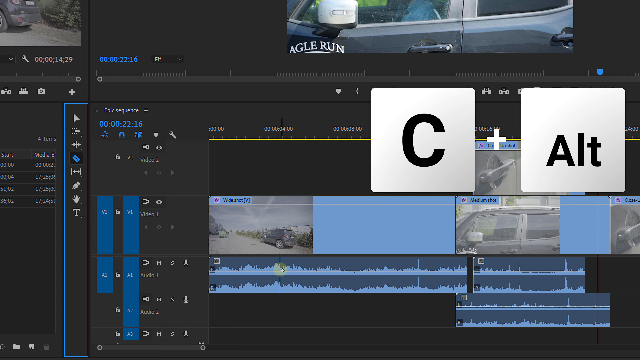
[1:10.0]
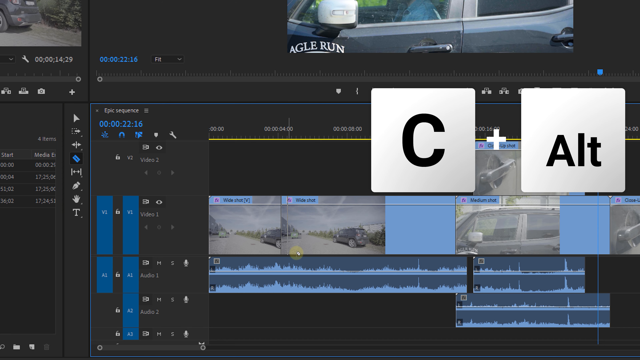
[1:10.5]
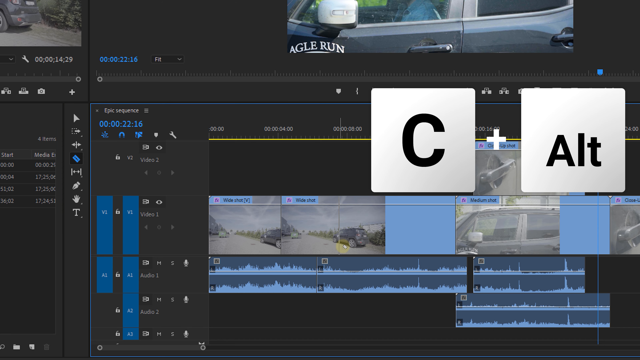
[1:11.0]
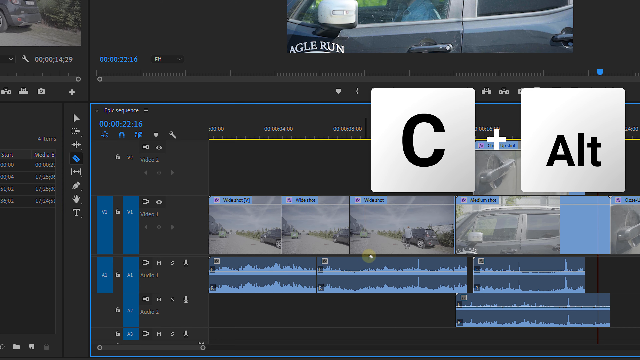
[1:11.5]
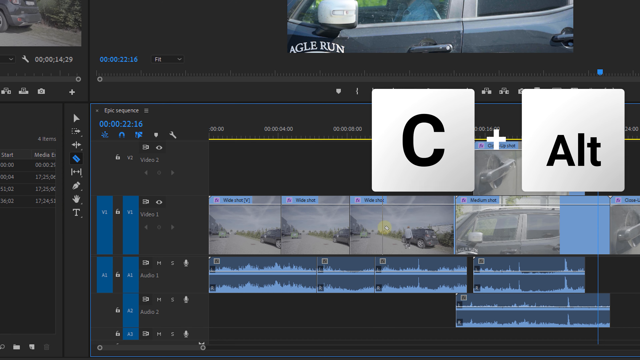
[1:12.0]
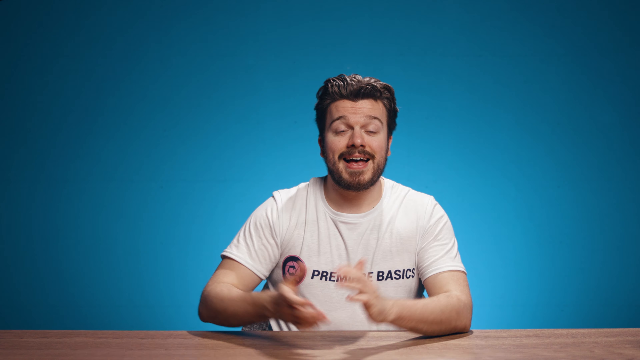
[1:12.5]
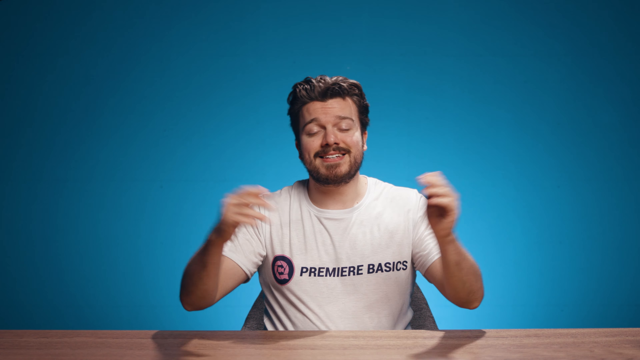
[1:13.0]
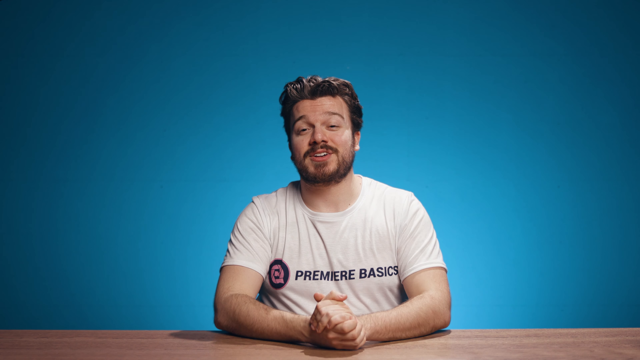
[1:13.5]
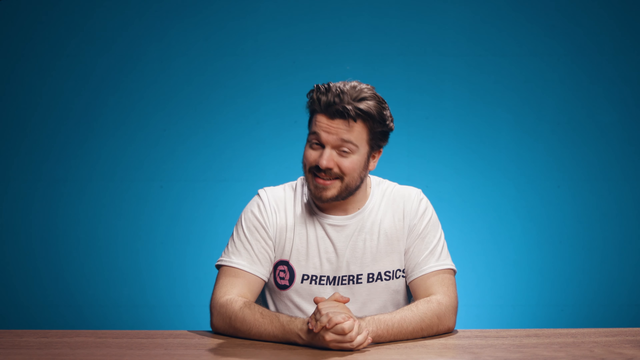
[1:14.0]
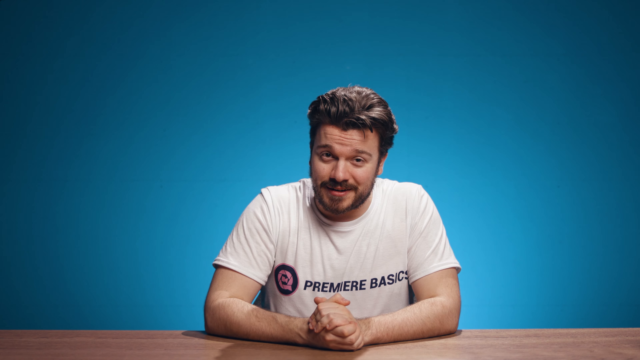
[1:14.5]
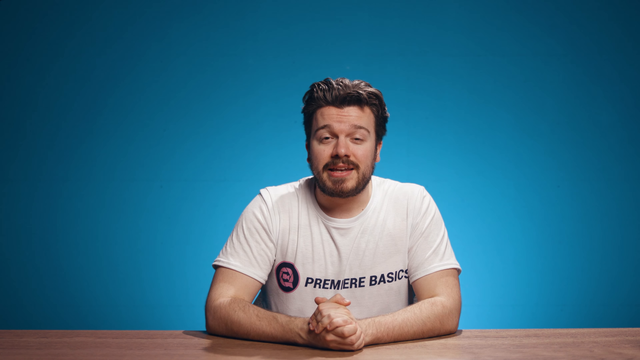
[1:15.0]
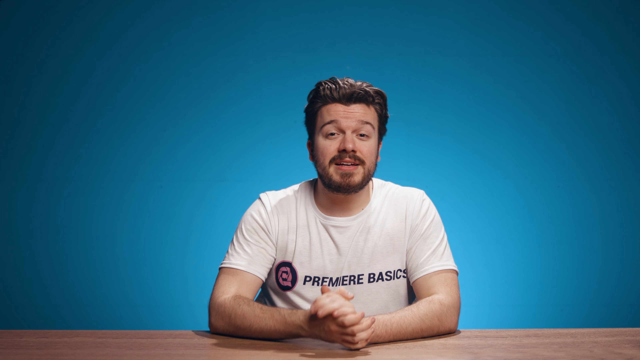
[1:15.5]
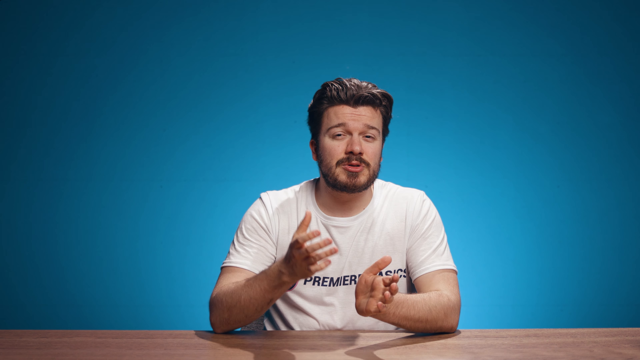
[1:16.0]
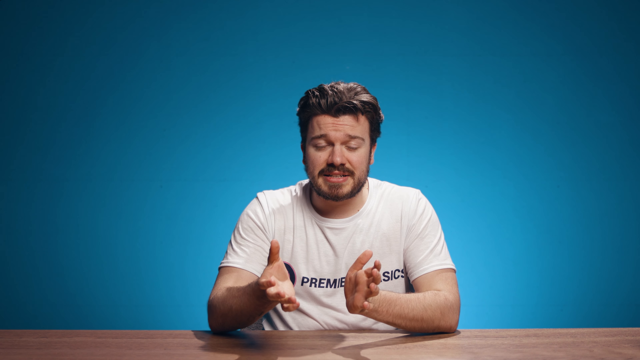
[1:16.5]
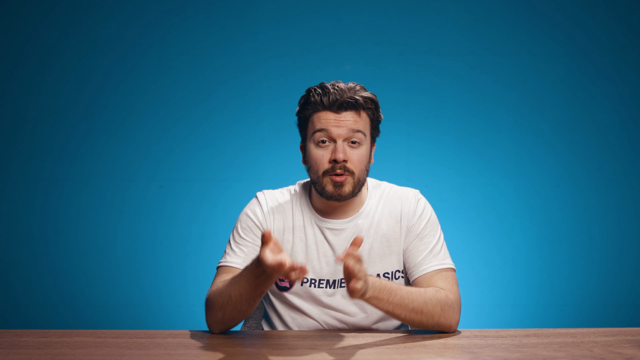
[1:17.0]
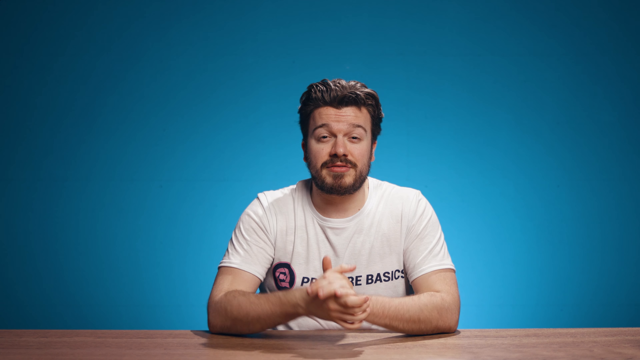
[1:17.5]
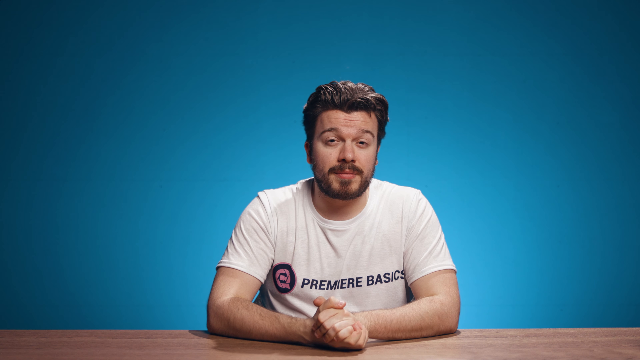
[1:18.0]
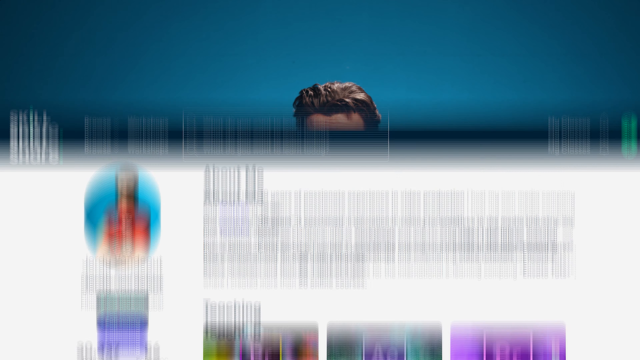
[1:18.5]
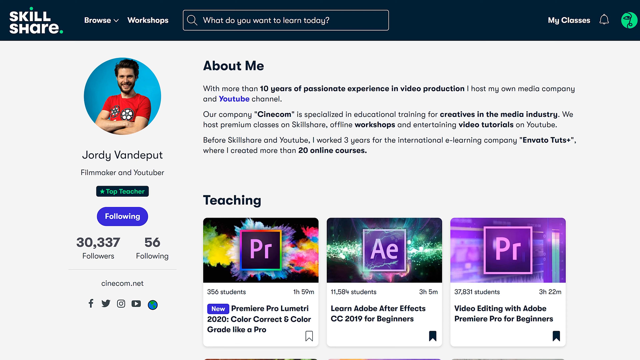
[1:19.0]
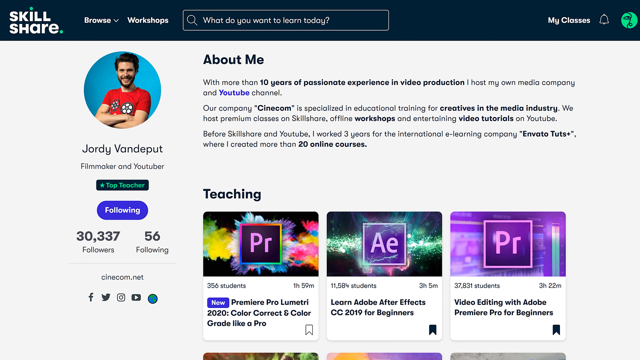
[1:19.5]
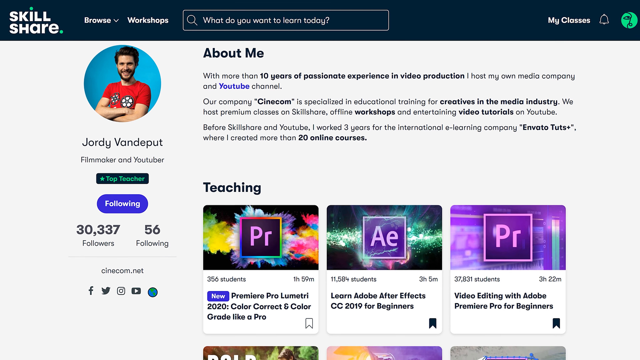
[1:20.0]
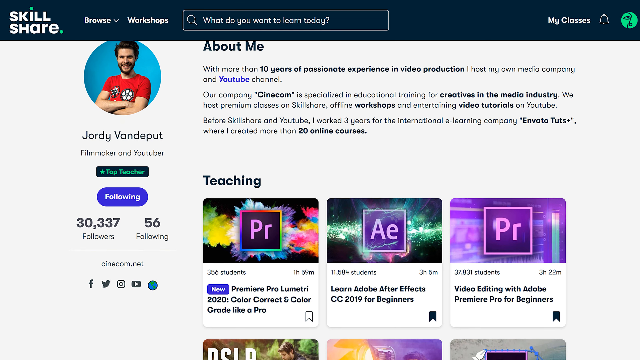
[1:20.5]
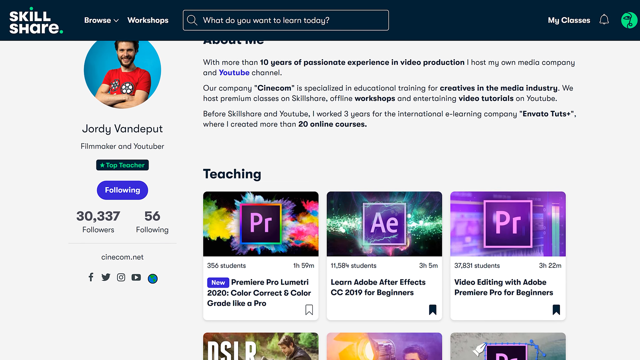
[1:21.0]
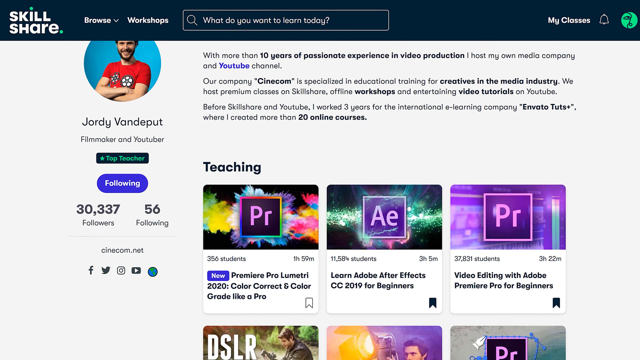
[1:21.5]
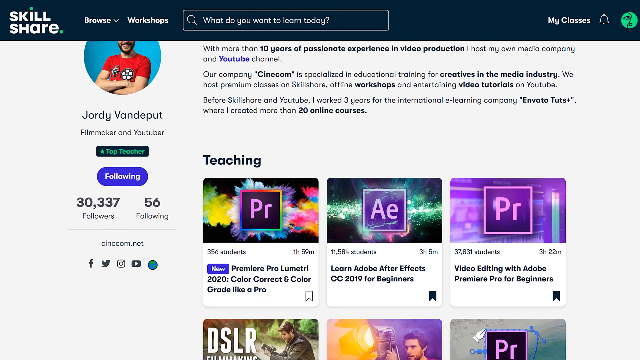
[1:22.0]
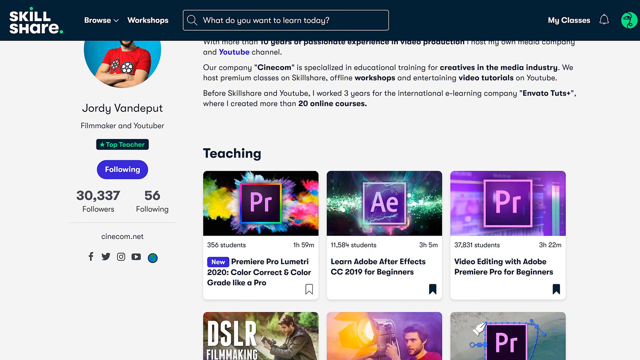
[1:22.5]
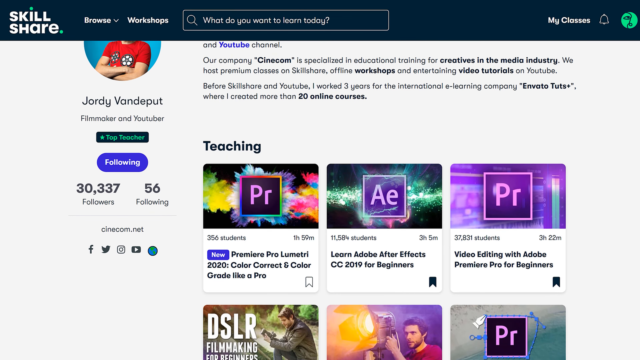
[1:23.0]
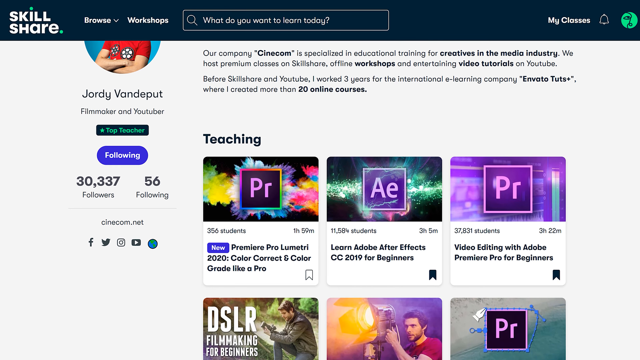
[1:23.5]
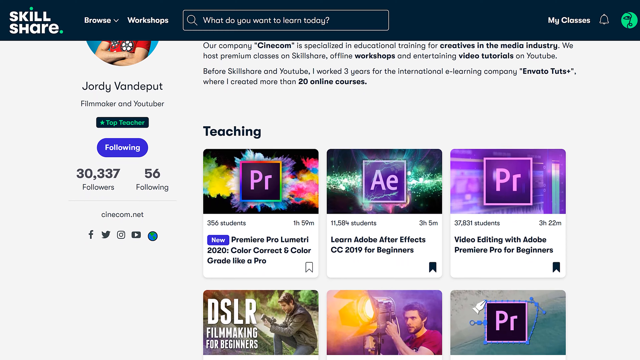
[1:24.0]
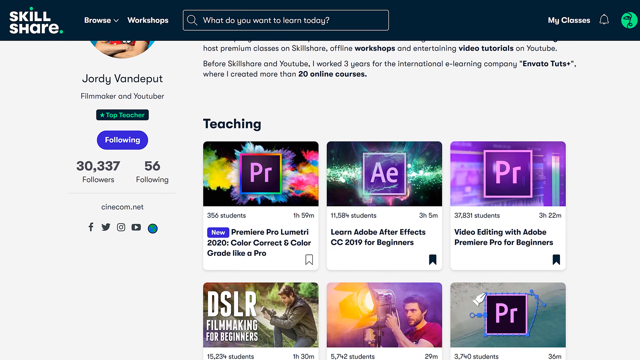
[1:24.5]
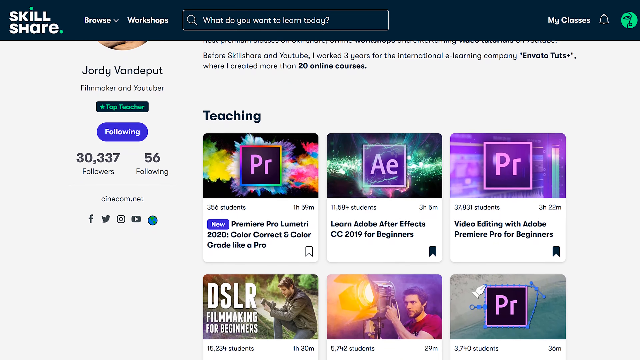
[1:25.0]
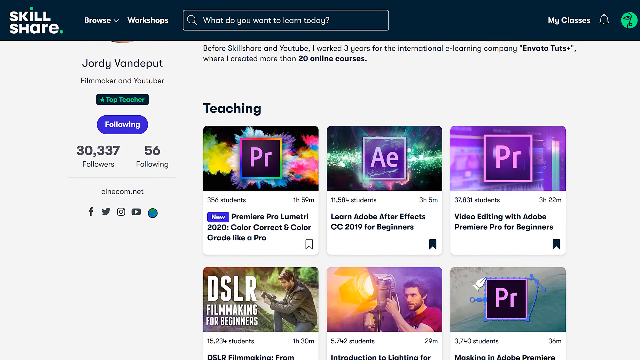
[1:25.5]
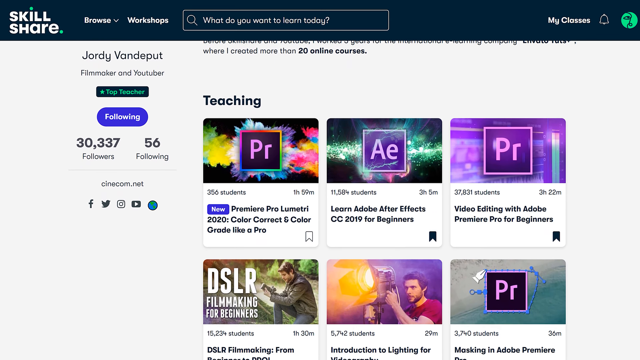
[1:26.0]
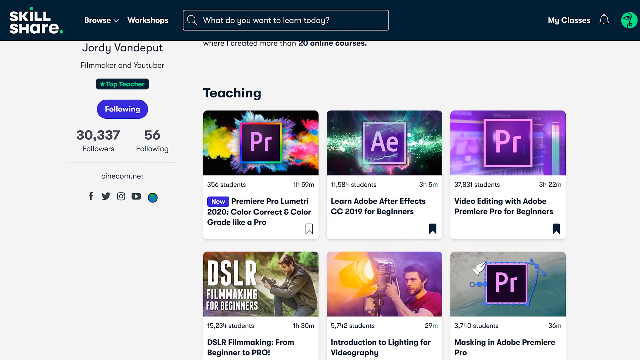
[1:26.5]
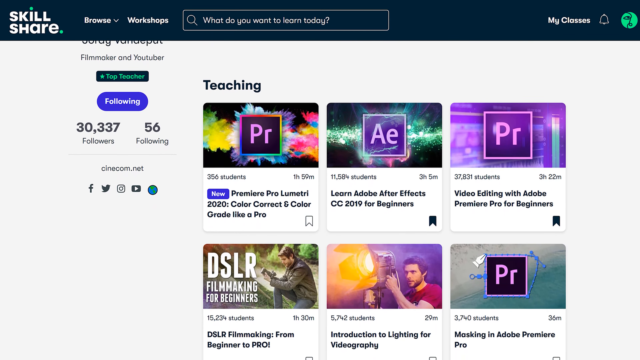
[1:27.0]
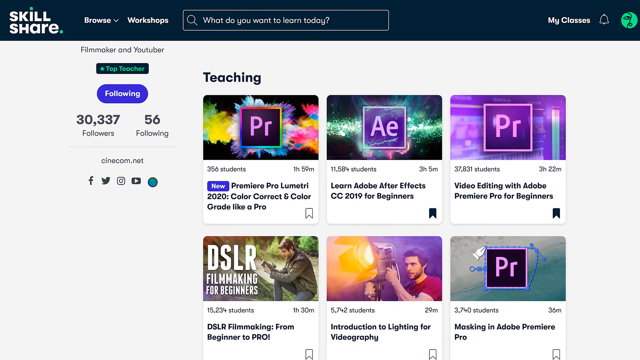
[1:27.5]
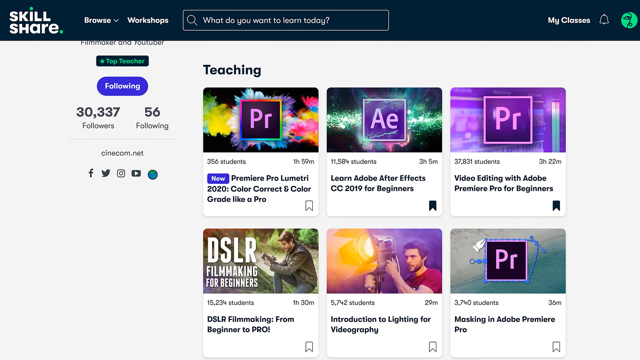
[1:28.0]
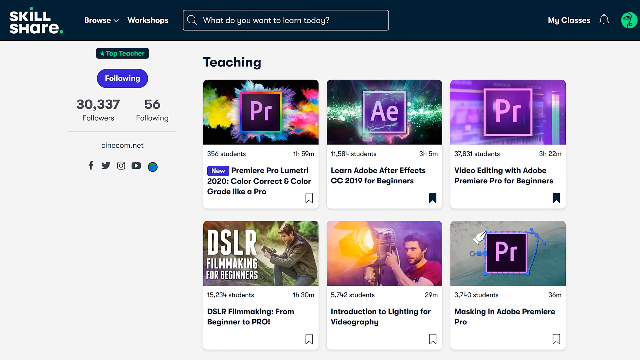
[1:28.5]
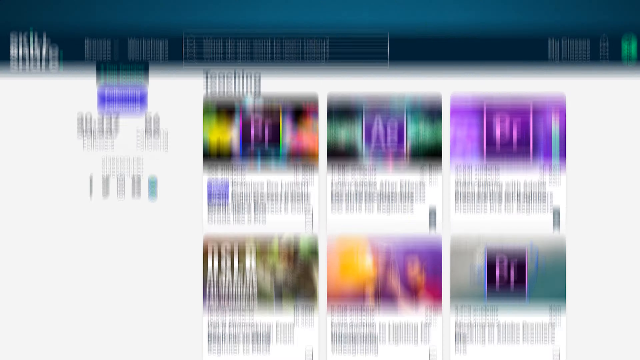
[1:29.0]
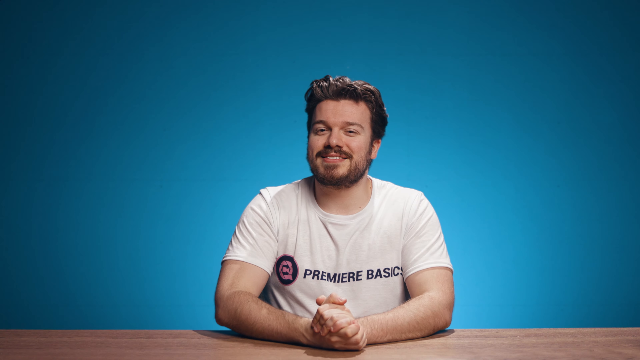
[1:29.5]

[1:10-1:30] A laptop, a pen, some glasses and a flower are on a table. The presenter appears, wearing a white t-shirt; he has short hair and a short beard and is energetic. A screen recording of a PC follows, in which a black car at the top is being edited, with versions being posted and options shown for what comes next. Later his social media page appears, apparently an Instagram page, showing 30,000 followers and 56 people followed.